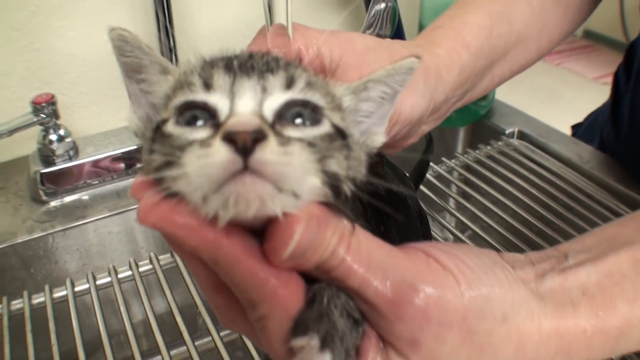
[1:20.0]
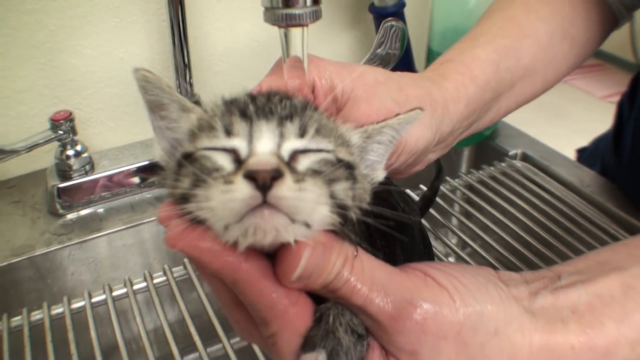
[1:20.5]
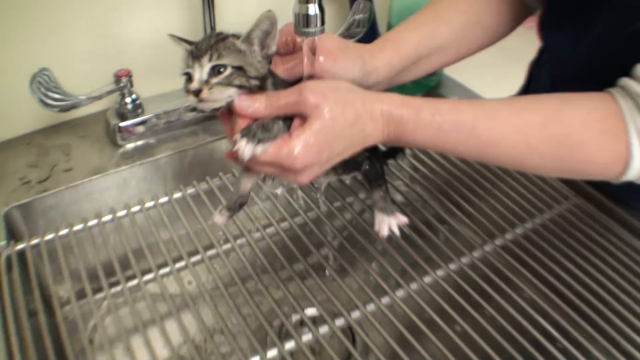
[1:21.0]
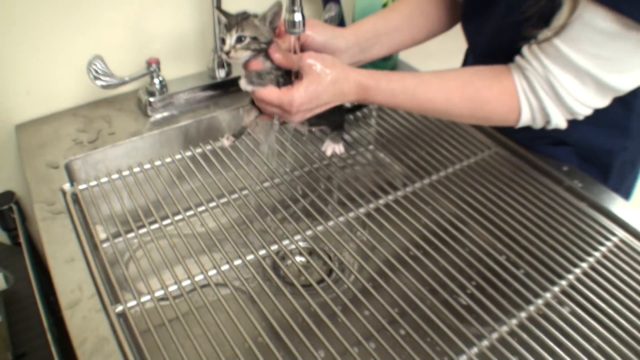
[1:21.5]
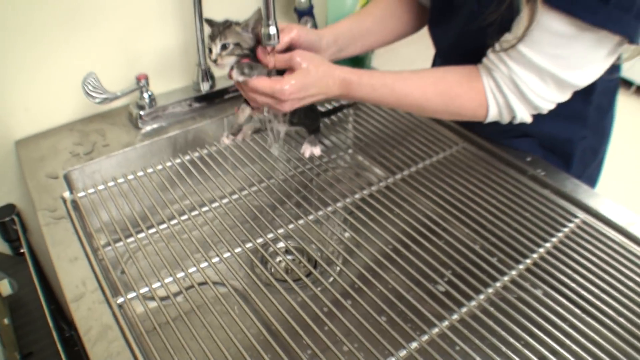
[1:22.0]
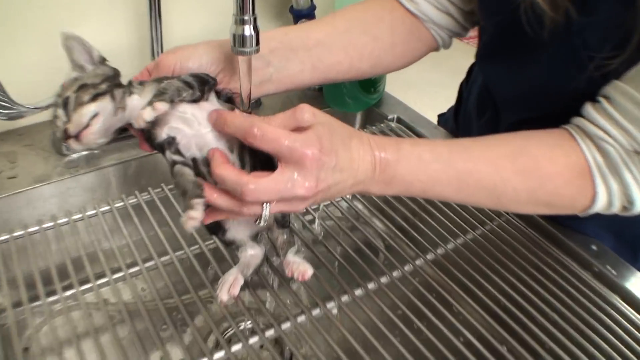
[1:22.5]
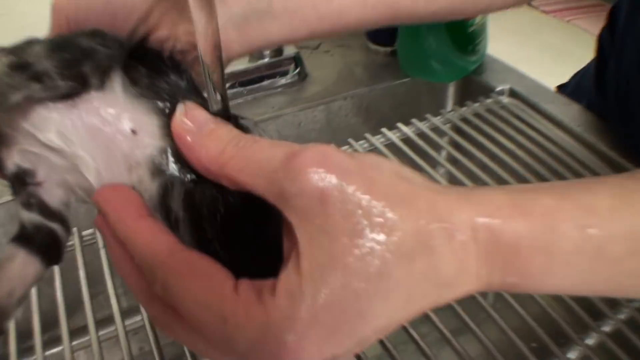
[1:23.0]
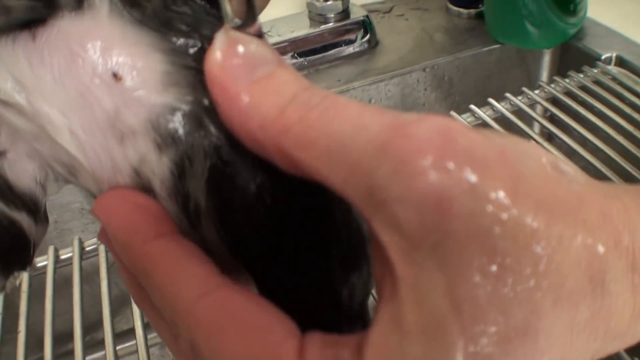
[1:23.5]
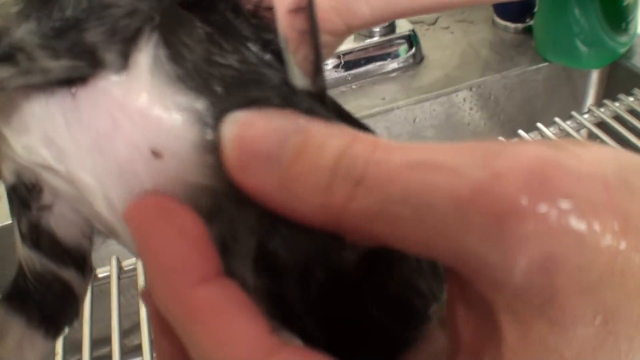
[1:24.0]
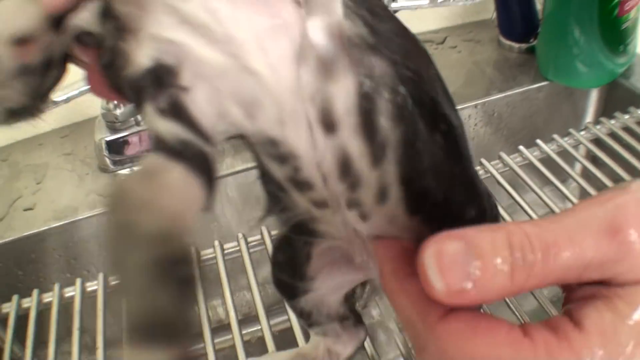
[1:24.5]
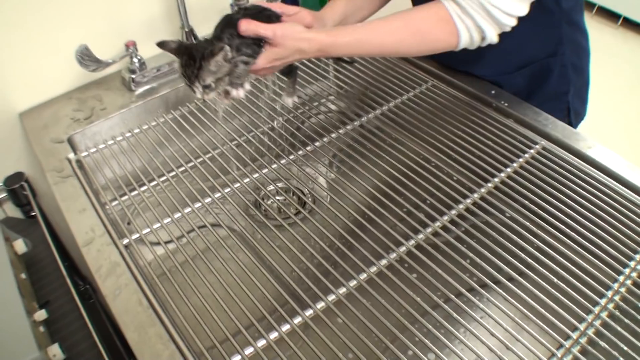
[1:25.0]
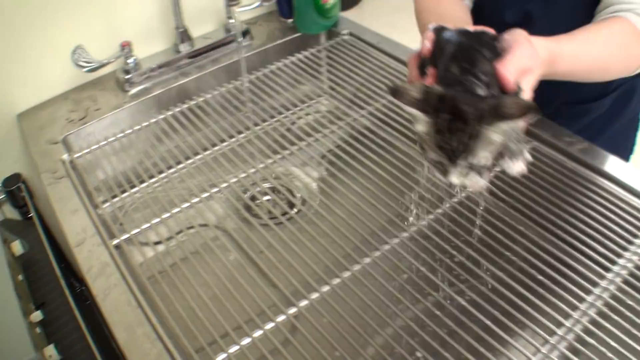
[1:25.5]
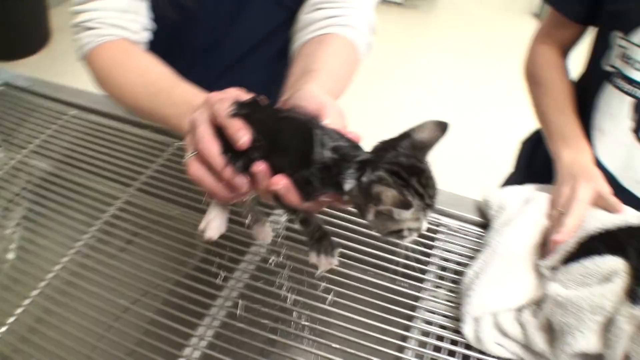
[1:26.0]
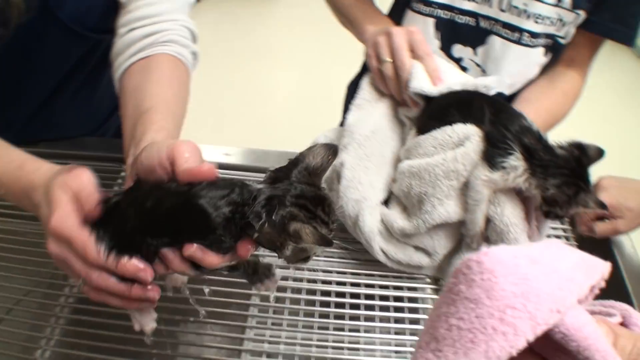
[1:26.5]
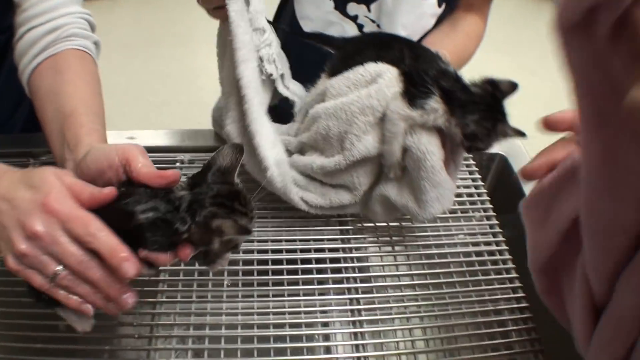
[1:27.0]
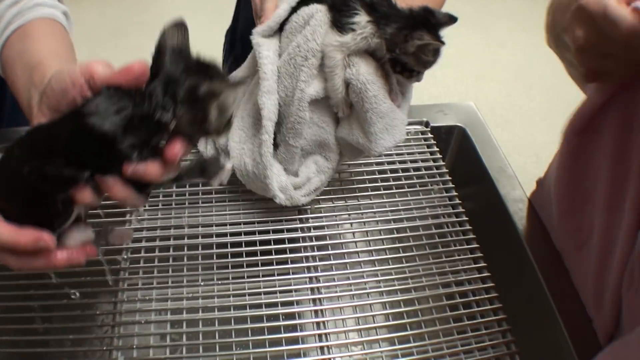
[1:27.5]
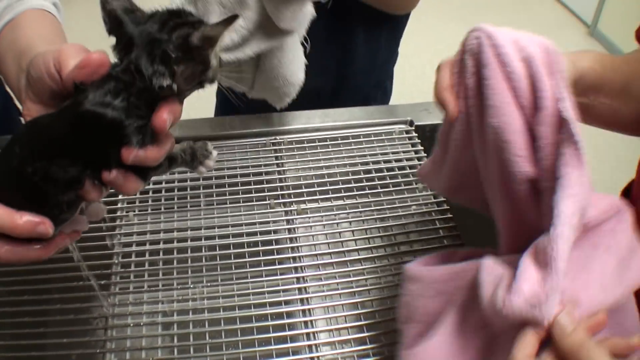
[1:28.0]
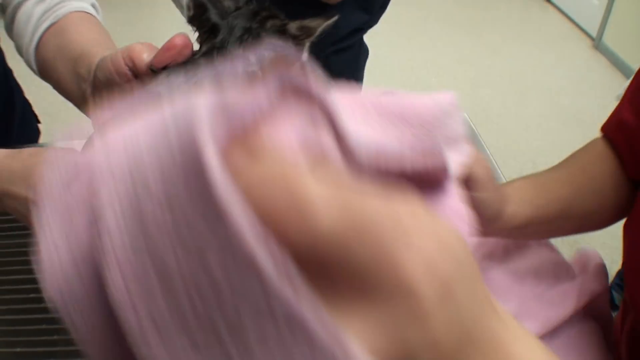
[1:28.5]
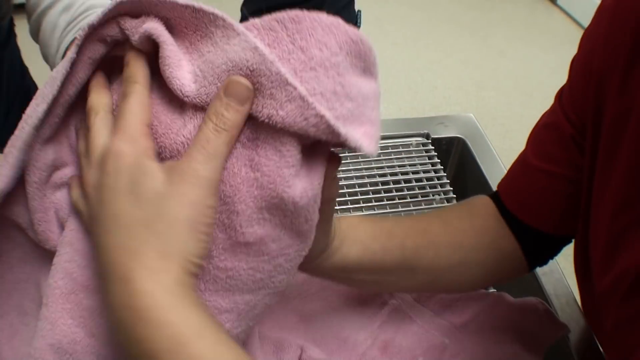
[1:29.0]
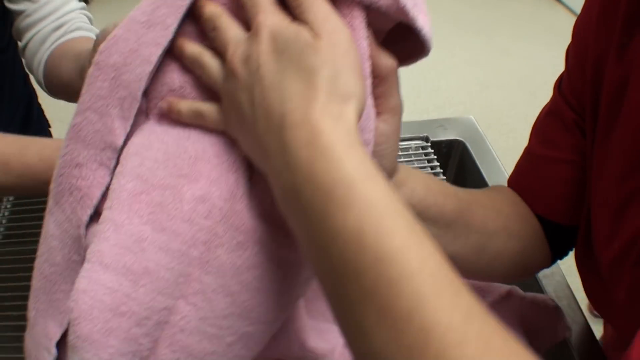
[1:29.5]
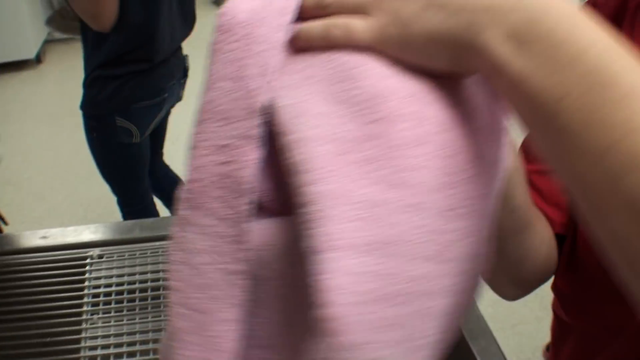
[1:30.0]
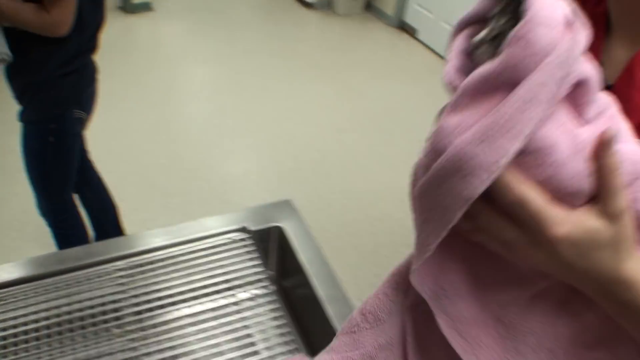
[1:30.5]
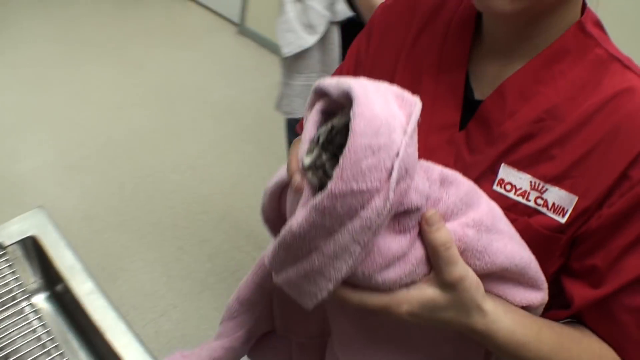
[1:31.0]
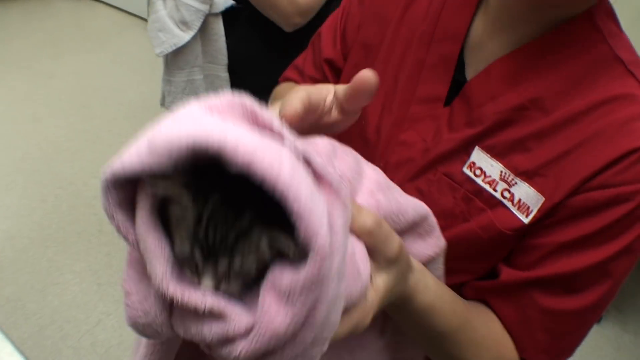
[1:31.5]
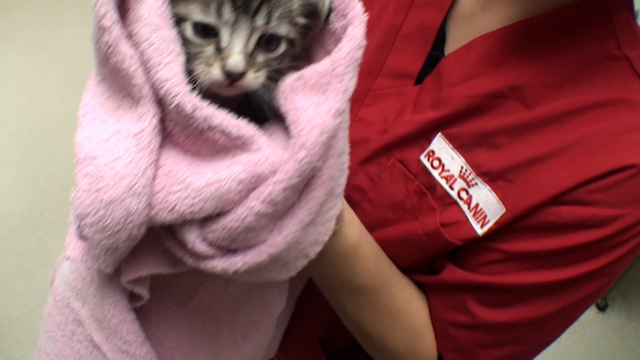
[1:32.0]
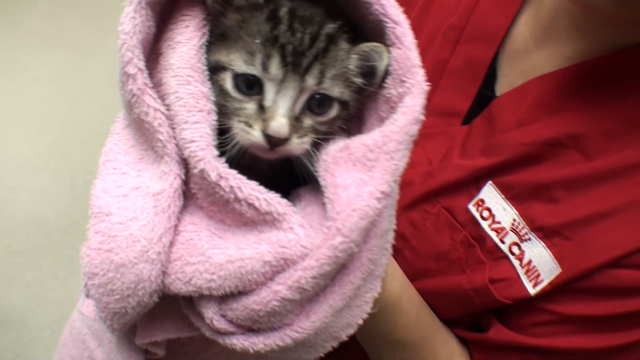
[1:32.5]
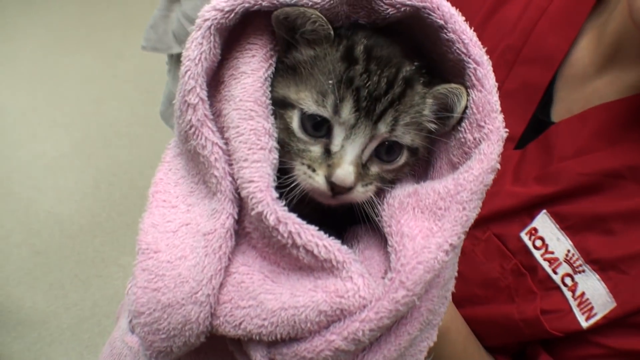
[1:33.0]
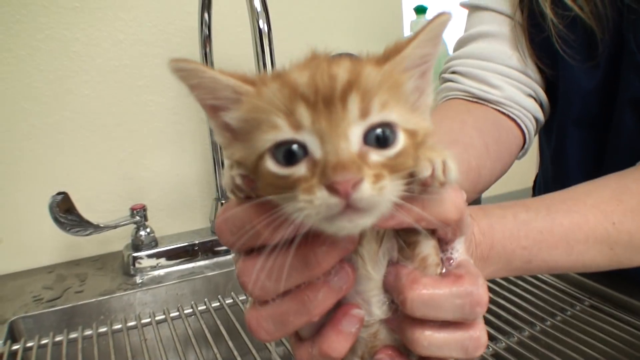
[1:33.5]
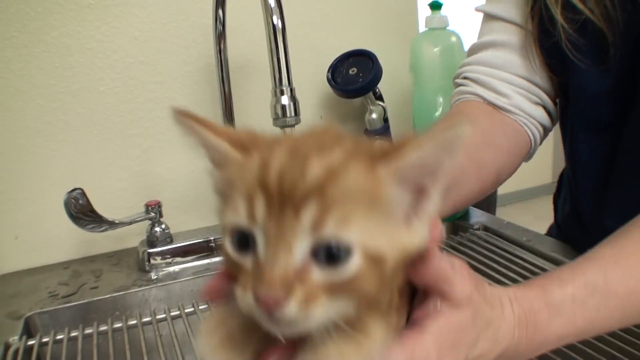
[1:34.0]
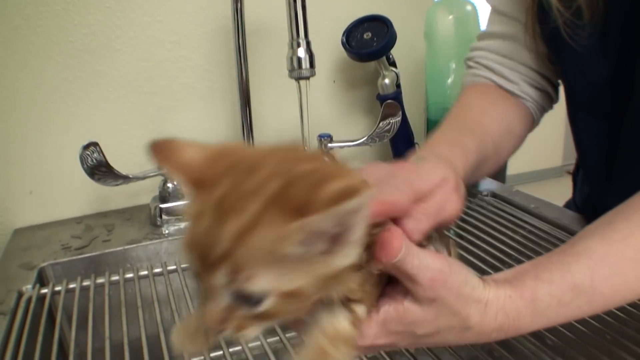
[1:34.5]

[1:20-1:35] At the vet ranch there is a lot of activity: one guy gives the medicine while two girls wash the cats. The kittens continue to get their syringes of medicine as the guy gently holds their little heads while he puts the syringe in their mouths. The kittens are getting really tired, and there are five of them. The two girls work like an assembly line: one washes a kitten and then passes it to the other girl to dry it off.